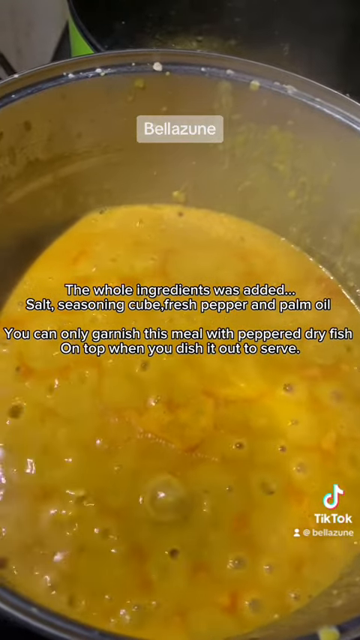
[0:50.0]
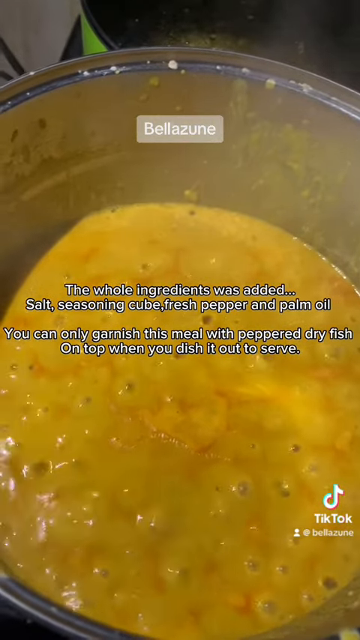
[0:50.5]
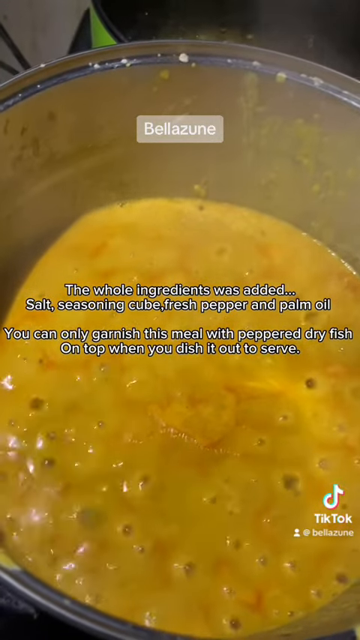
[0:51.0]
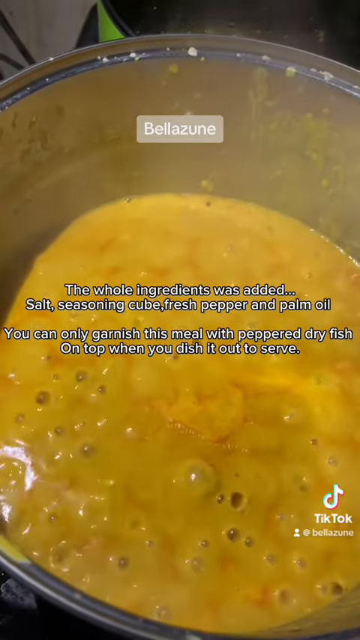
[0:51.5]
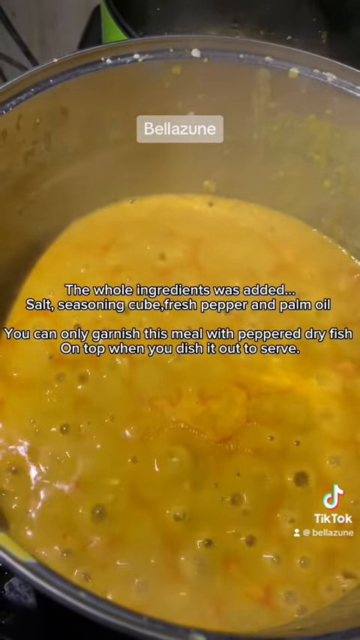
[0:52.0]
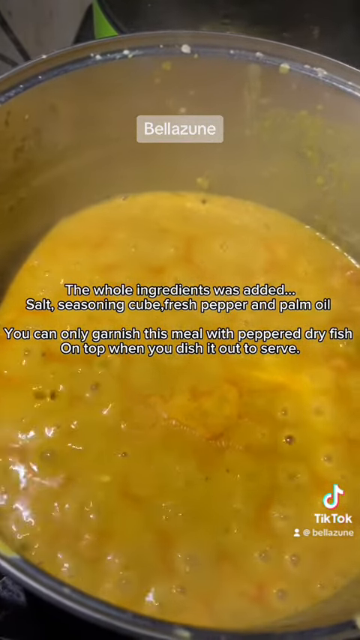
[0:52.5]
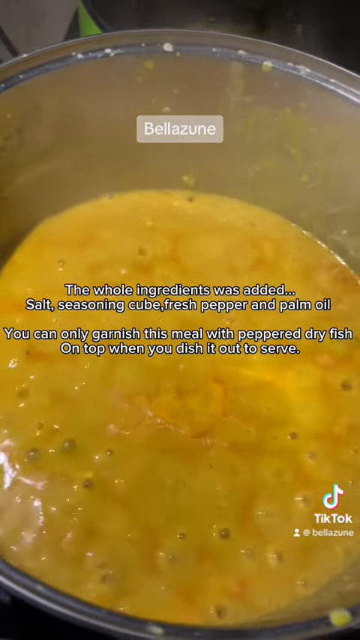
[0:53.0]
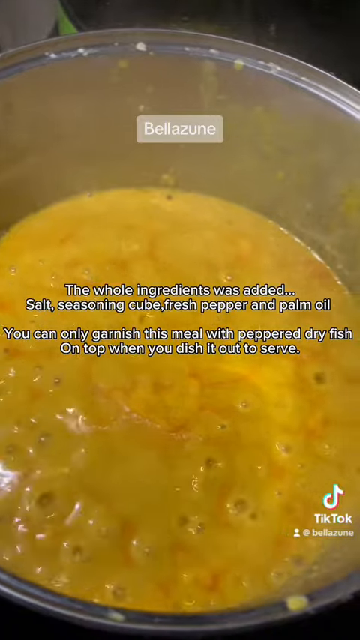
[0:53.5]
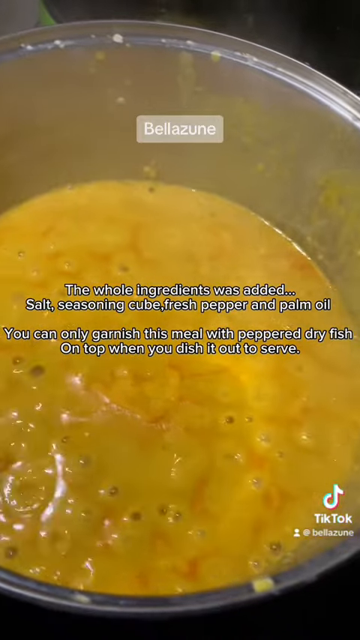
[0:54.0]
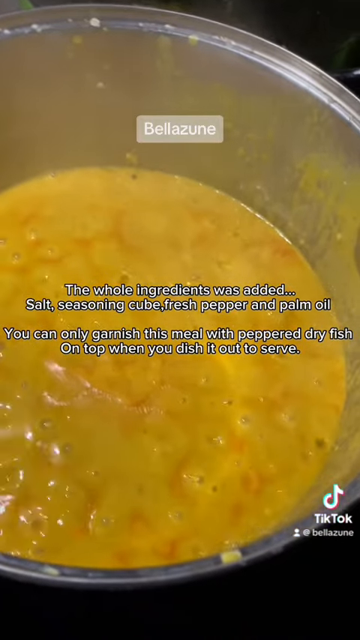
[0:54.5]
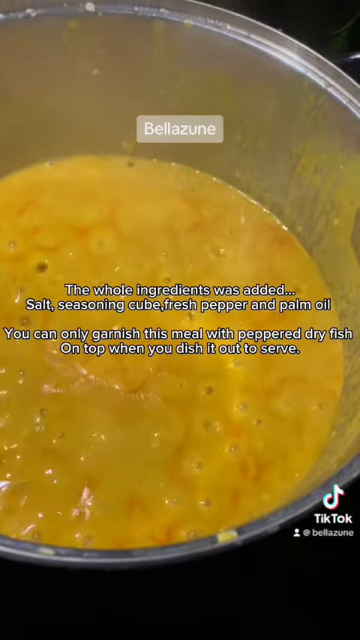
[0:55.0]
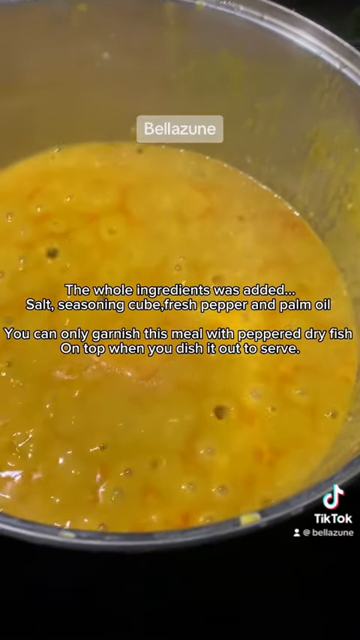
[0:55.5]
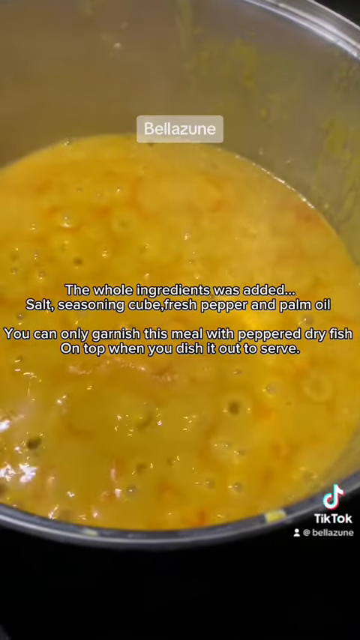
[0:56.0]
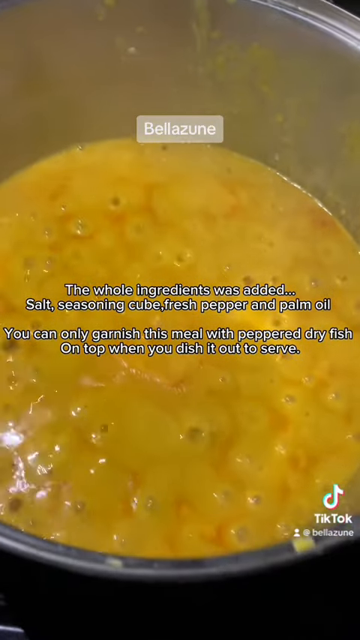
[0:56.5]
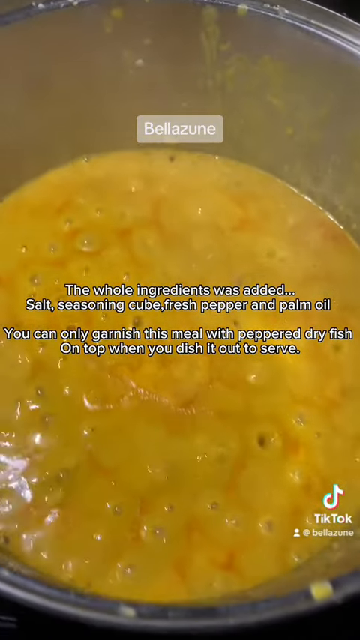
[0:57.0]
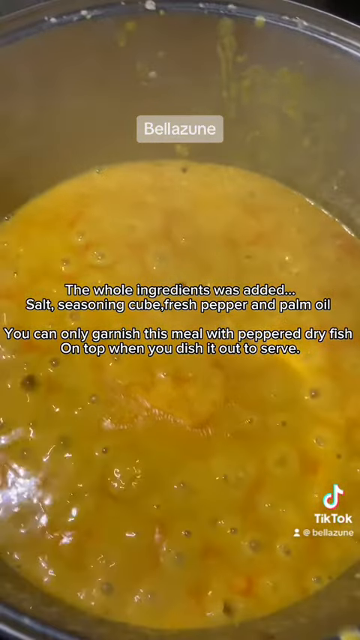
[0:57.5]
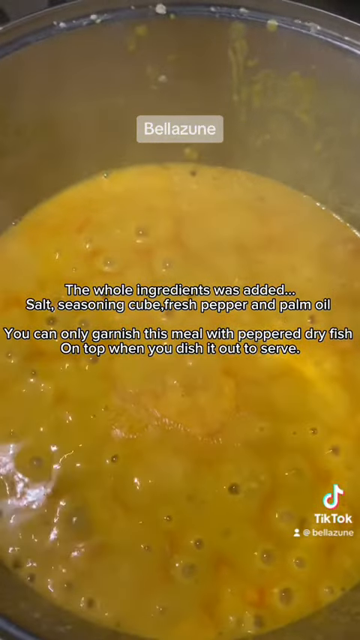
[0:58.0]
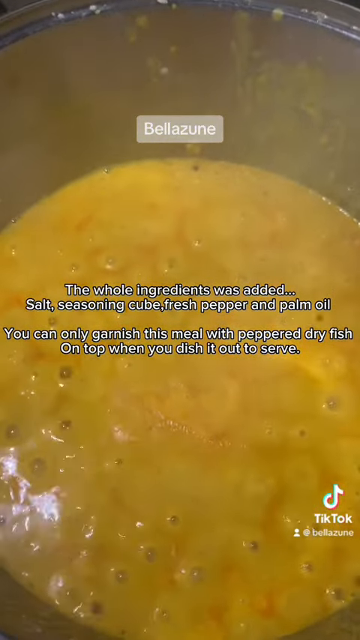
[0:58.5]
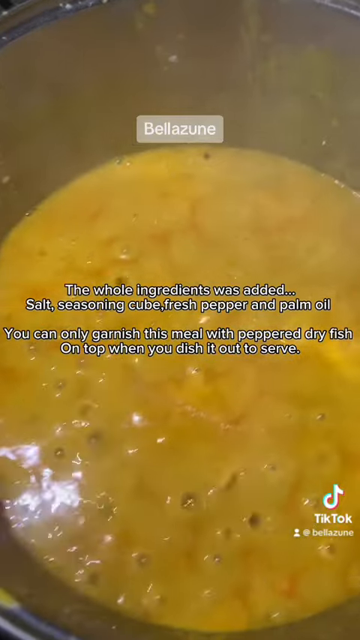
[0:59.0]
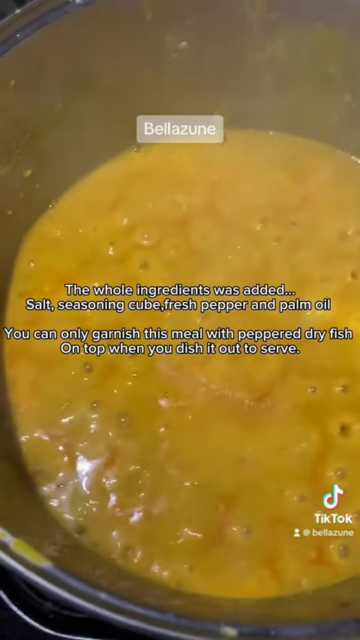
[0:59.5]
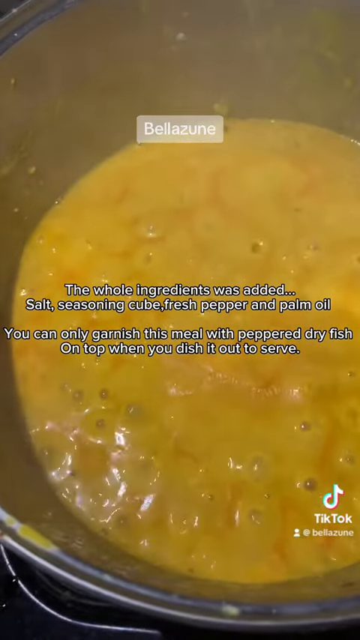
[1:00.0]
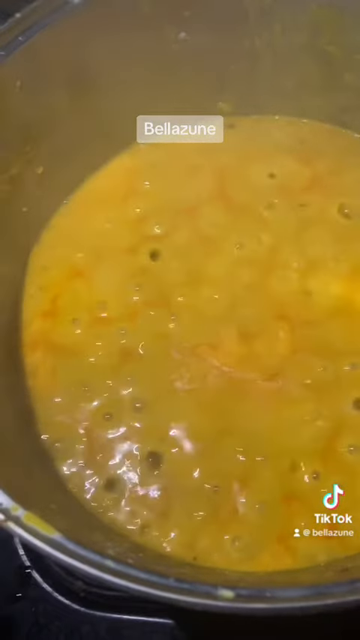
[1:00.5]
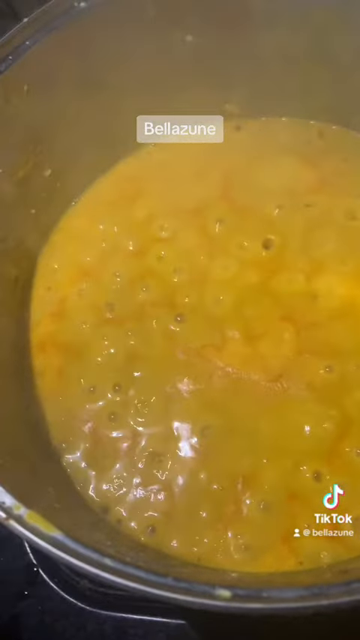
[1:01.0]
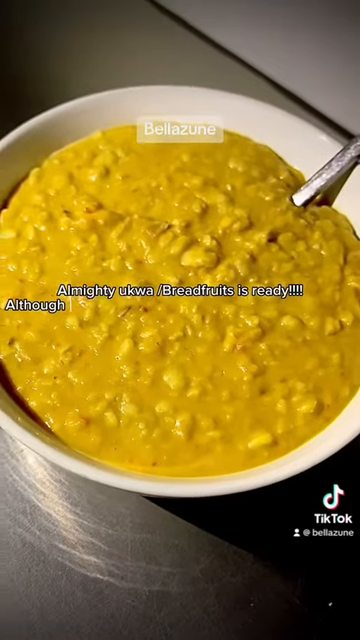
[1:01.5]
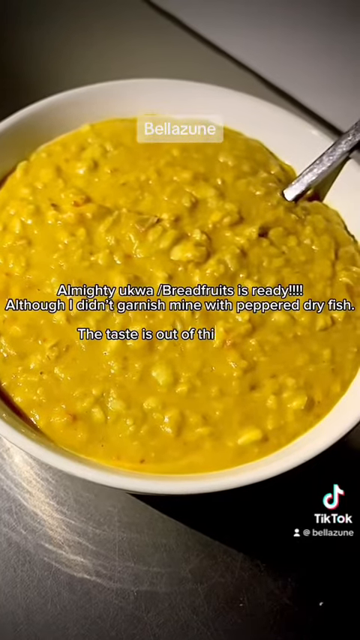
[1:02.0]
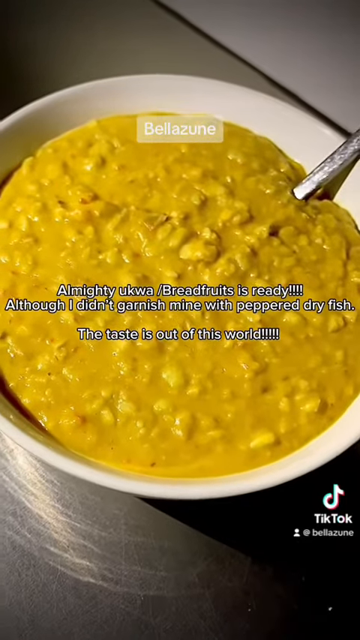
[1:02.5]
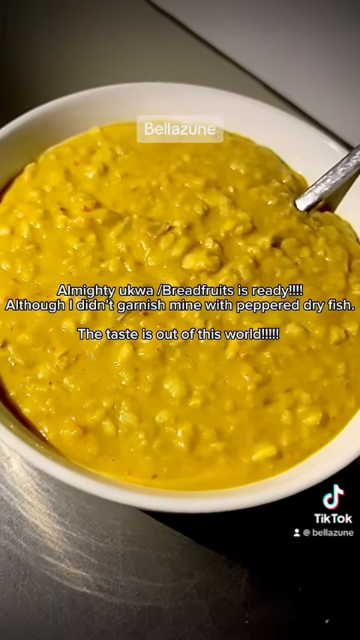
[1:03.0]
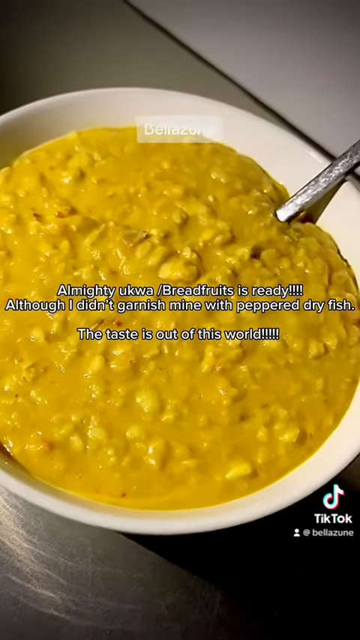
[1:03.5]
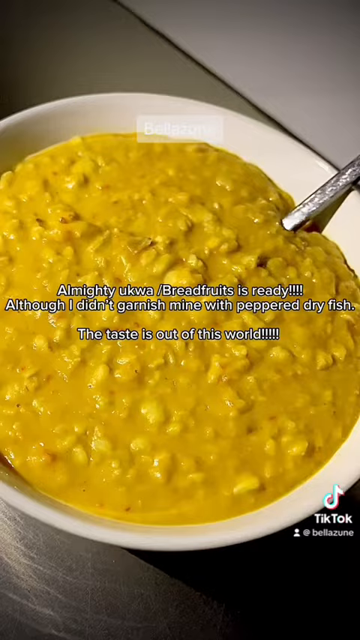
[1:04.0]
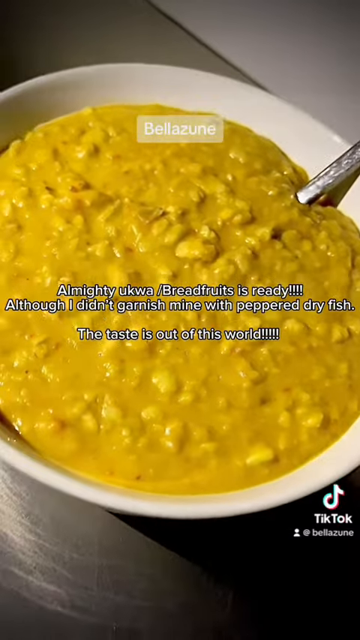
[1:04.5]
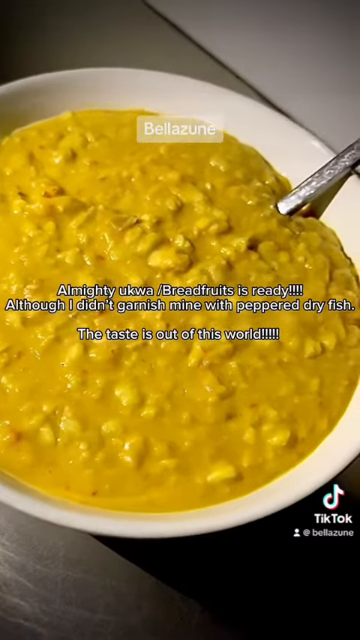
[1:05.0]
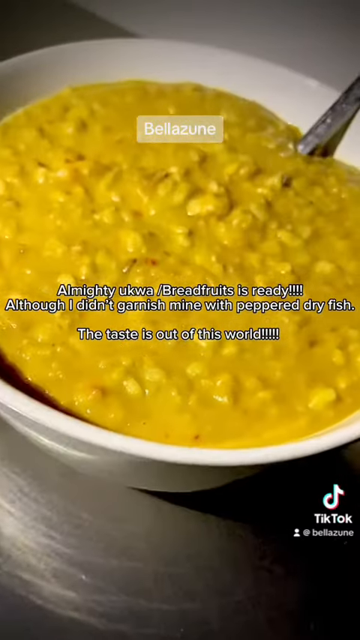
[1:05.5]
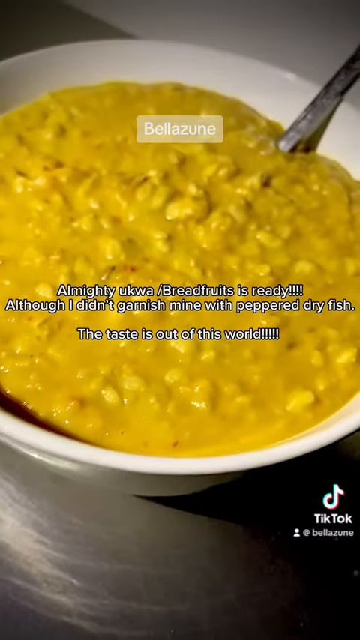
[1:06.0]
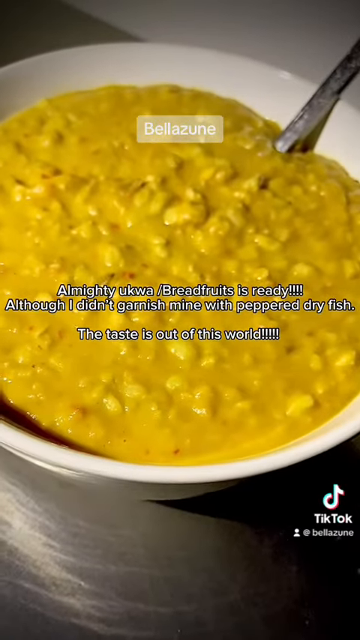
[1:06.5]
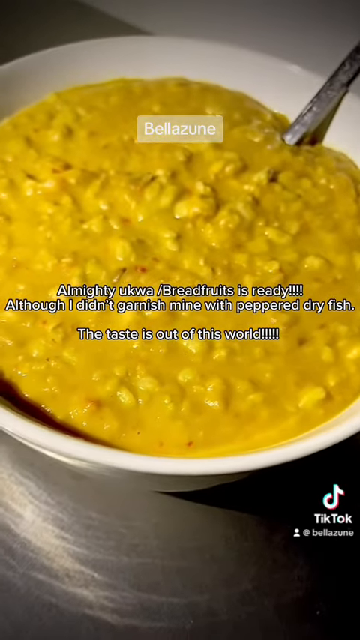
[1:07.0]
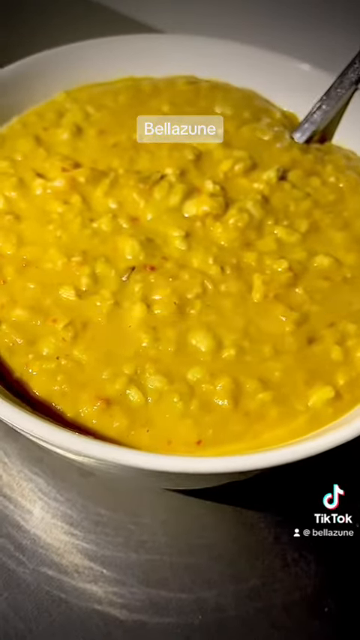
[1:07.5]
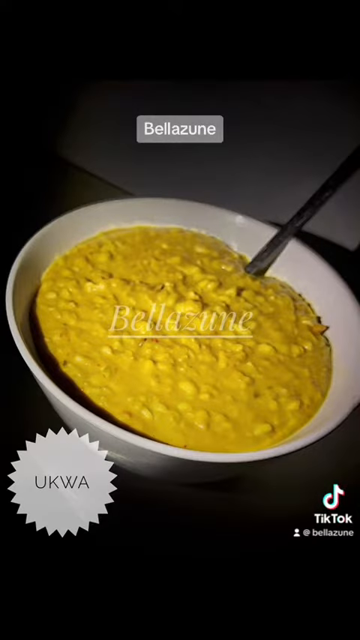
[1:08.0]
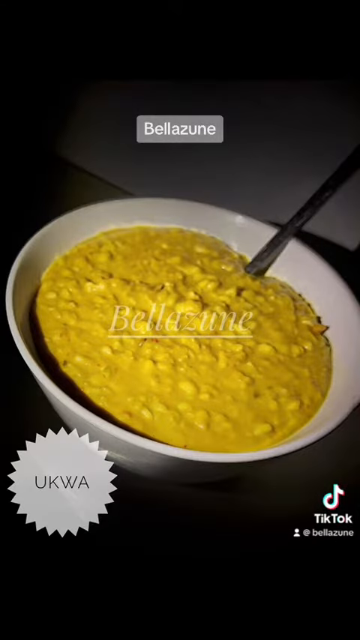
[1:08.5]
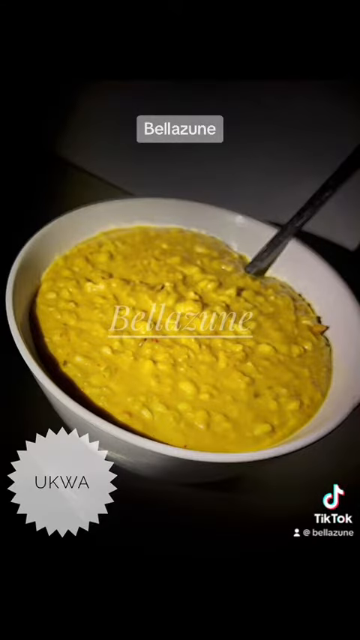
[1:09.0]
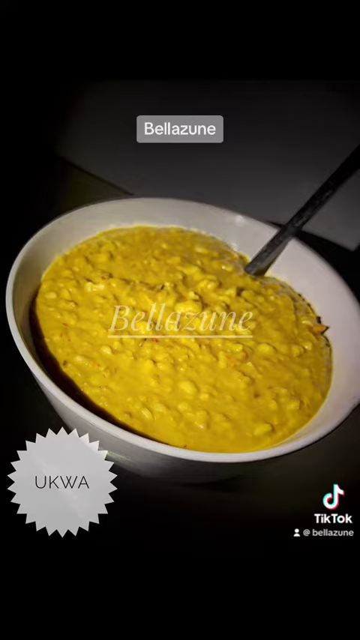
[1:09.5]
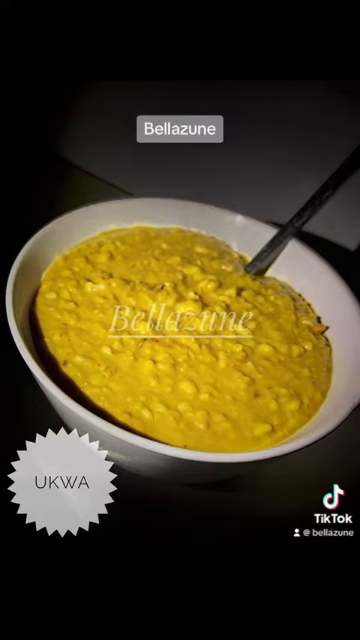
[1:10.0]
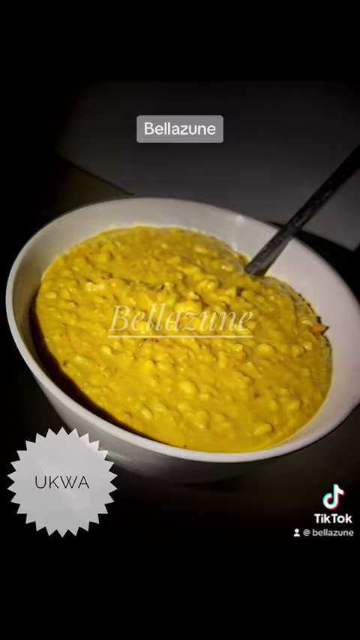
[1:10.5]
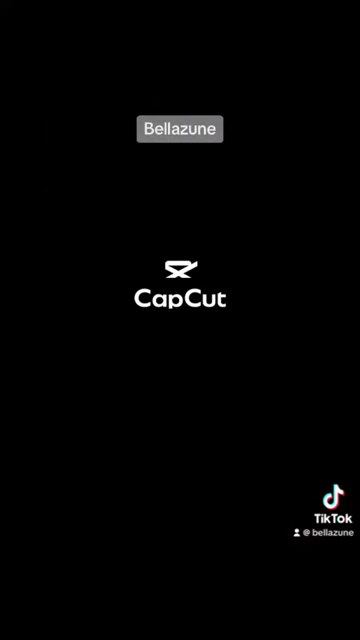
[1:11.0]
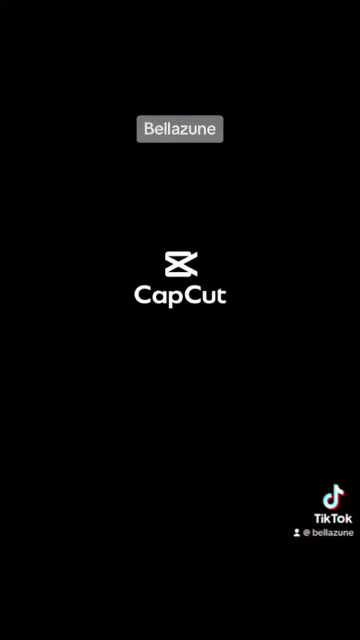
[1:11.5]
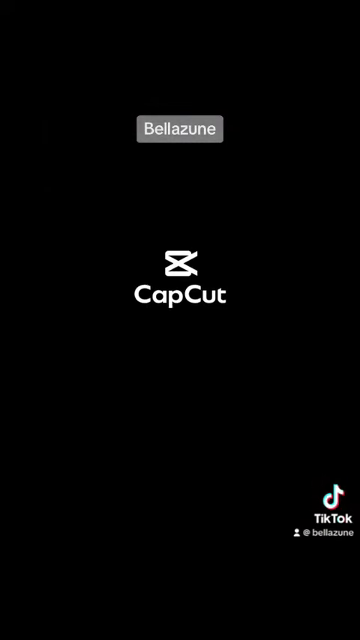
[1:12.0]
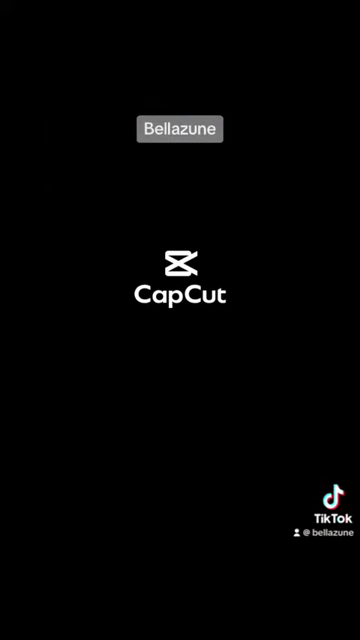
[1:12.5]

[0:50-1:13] Yellowy-orangey food boils in a pan, dominating the frame, while the earlier caption stays on screen. The camera moves around from left to right, then up and around across the food; the footage possibly looks slowed down, judging by the speed of the bubbles. Partway through, the food looks like it is being served up in a bowl, and a graphic reads: "Almighty ukwa /Breadfruits is ready!!!! Although I didn't garnish mine with peppered dry fish. The taste is out of this world!!!!!." The camera pans around to yellow lumpy food in a white bowl on a dark wooden table next to a white wall, with a silver metal spoon or fork on the right-hand side. After a jump cut, the video shows basically the same graphic as at the beginning: "Bellazune" at the top, "Bellazune" in the middle, "UKWA" in the bottom left and the TikTok logo in the bottom right. It seems to be a cooking demonstration for making a breadfruit dish.